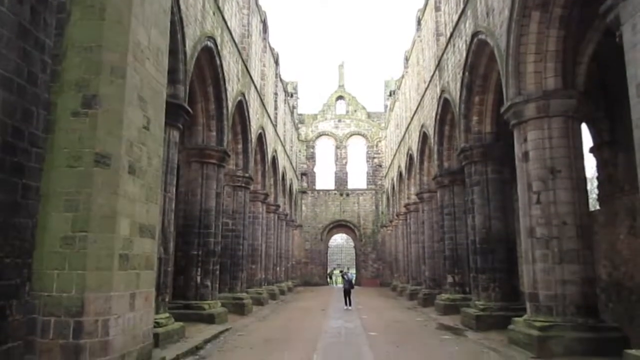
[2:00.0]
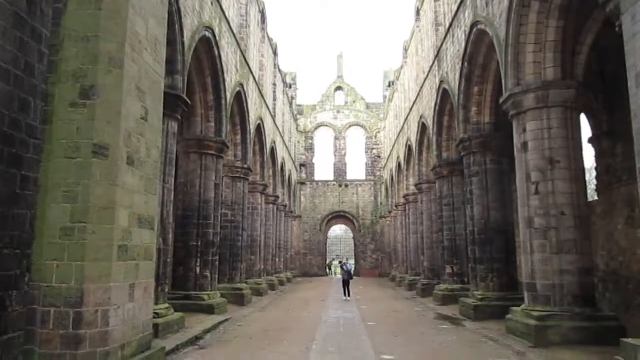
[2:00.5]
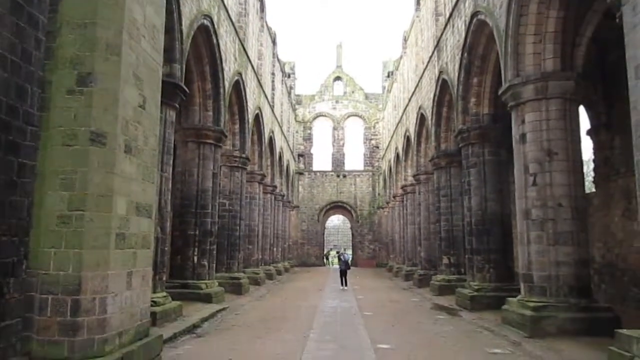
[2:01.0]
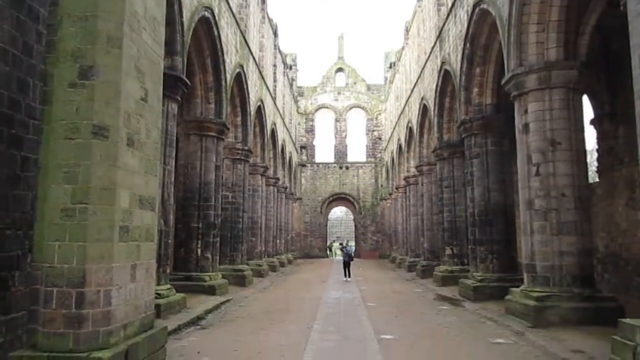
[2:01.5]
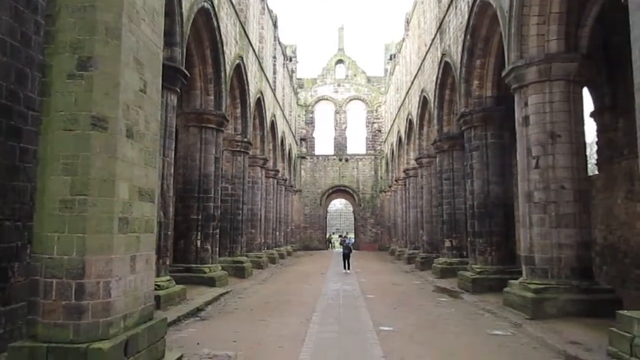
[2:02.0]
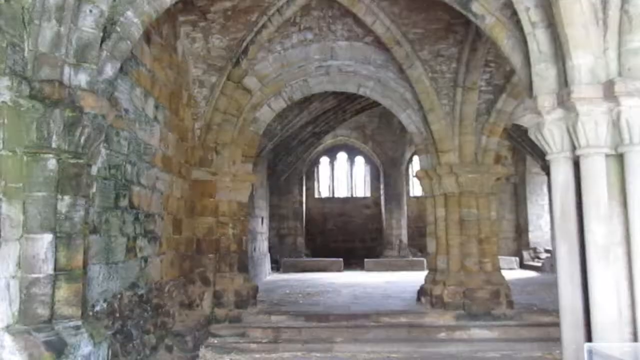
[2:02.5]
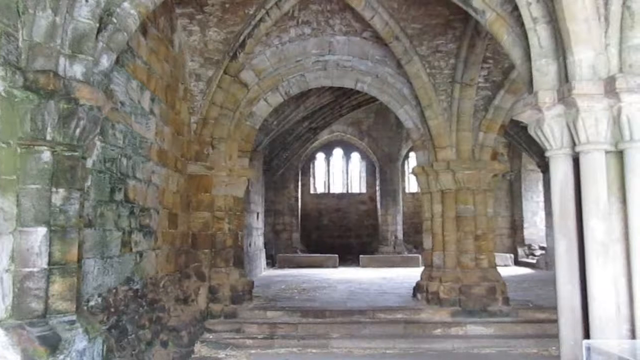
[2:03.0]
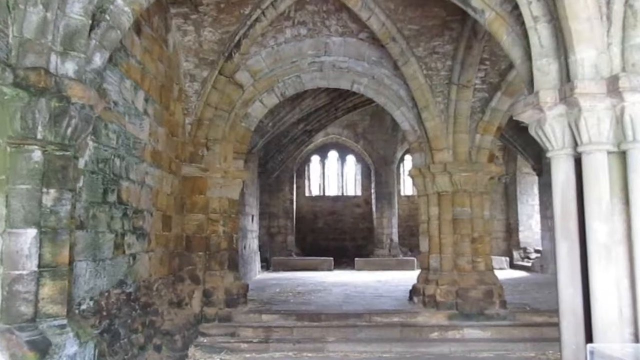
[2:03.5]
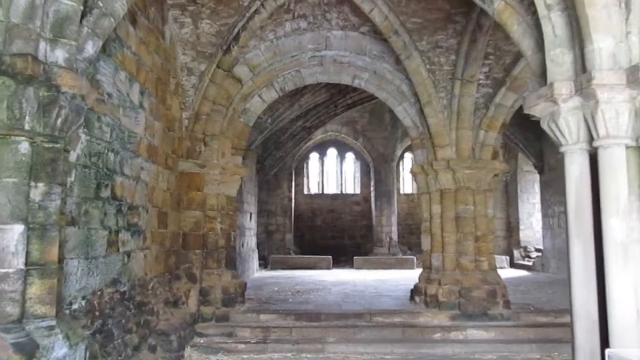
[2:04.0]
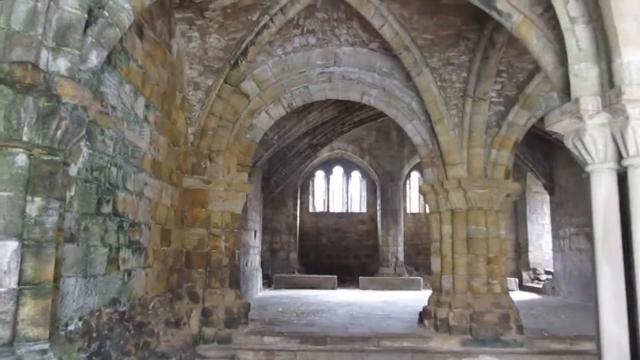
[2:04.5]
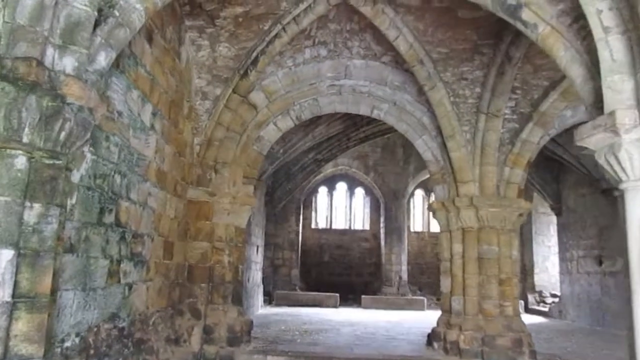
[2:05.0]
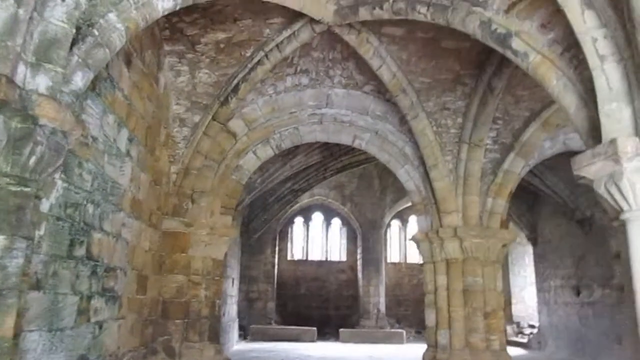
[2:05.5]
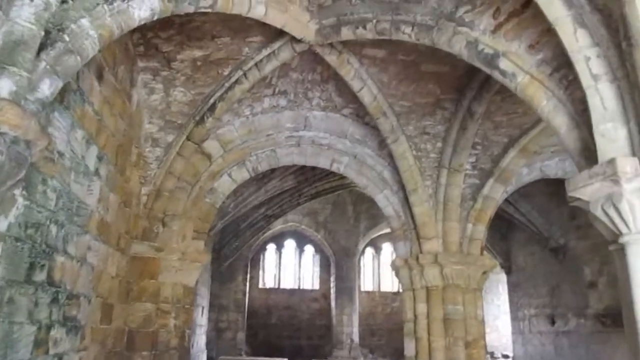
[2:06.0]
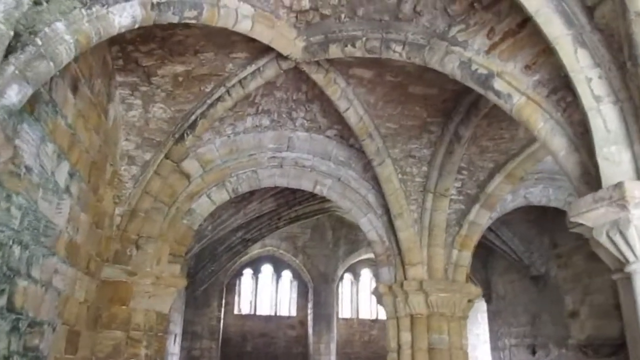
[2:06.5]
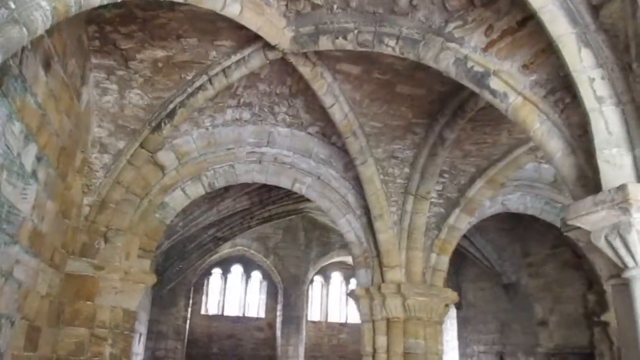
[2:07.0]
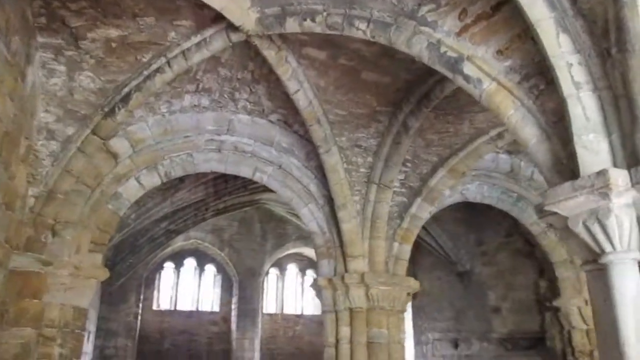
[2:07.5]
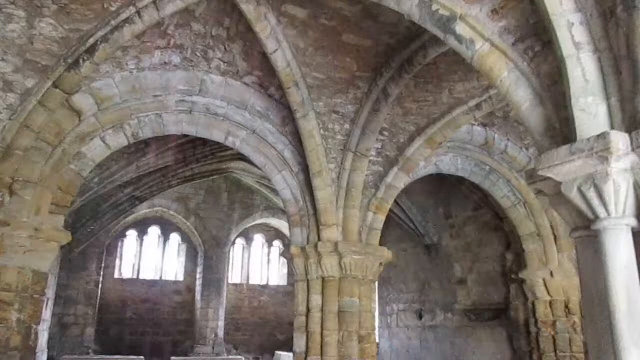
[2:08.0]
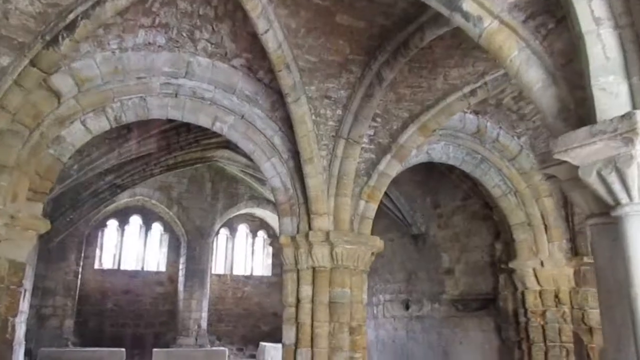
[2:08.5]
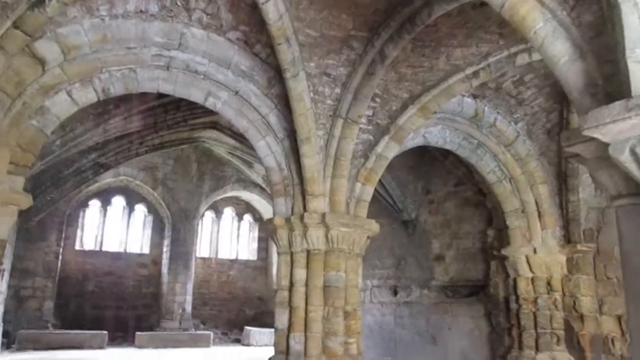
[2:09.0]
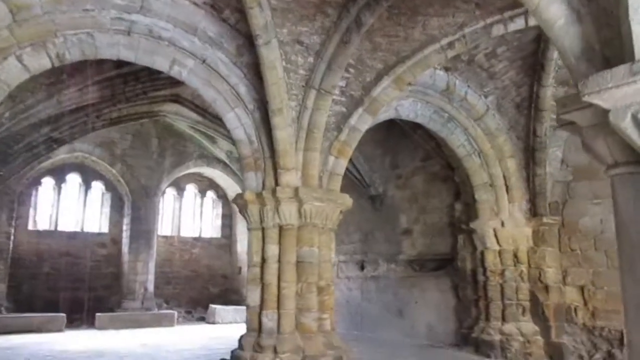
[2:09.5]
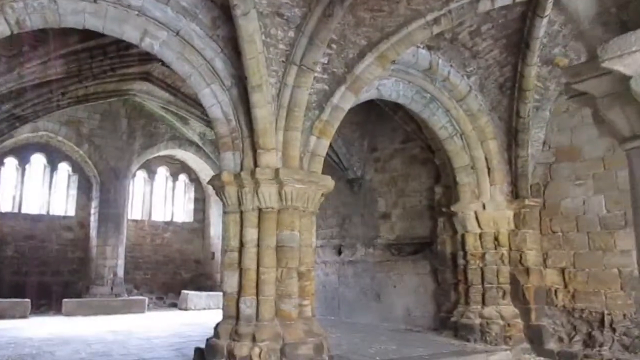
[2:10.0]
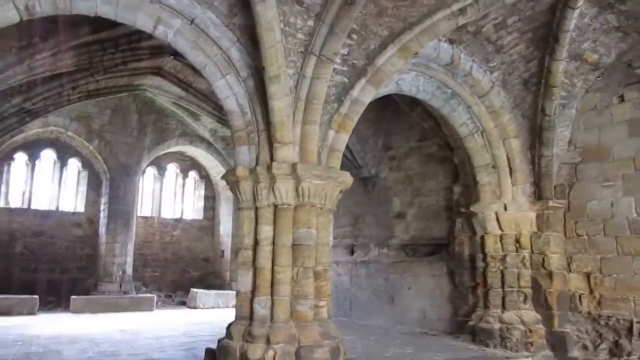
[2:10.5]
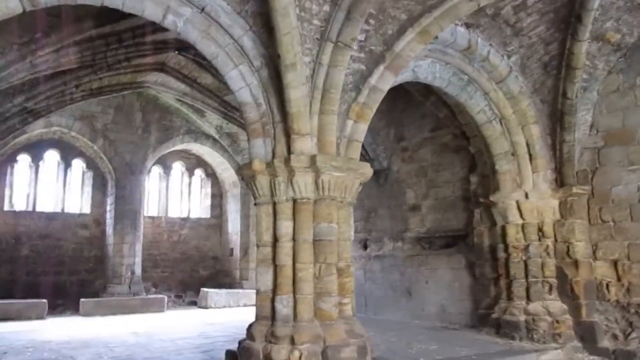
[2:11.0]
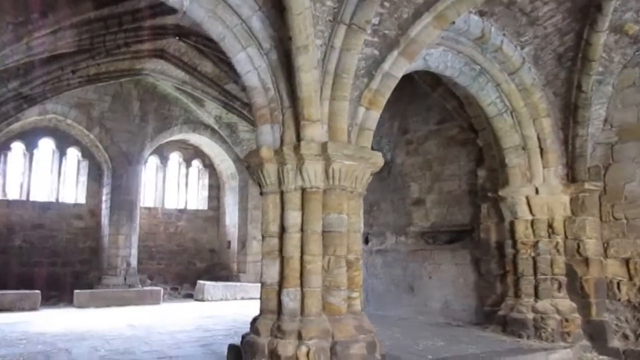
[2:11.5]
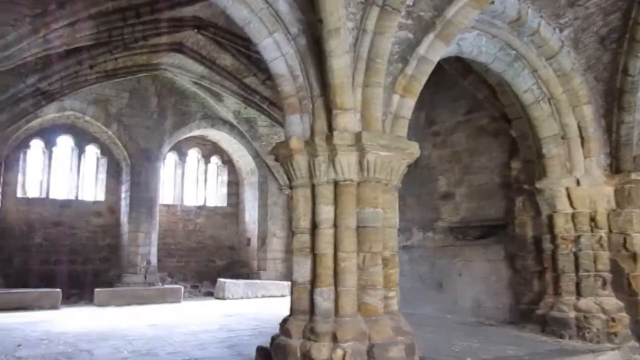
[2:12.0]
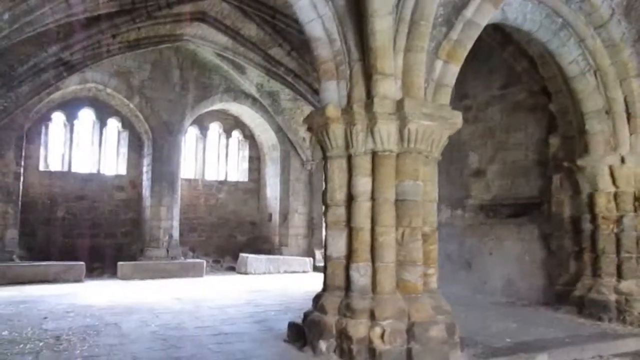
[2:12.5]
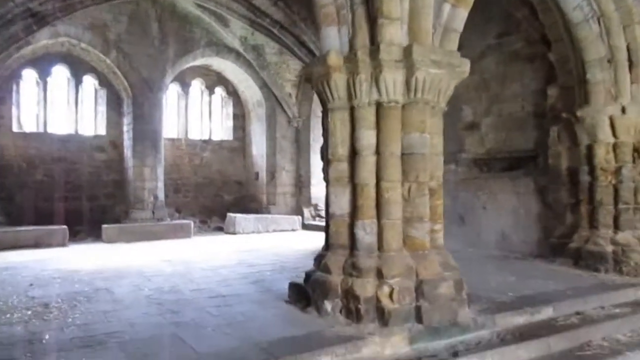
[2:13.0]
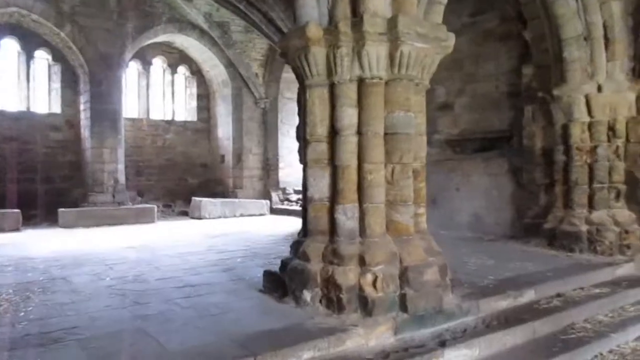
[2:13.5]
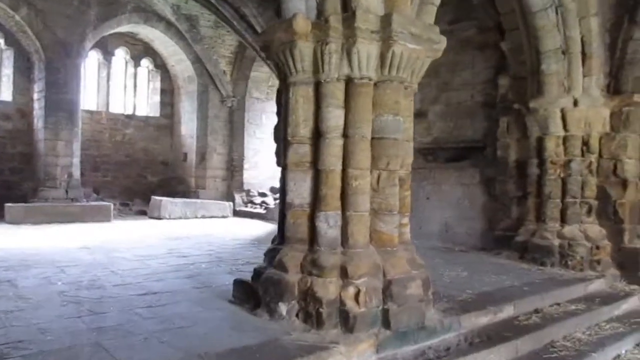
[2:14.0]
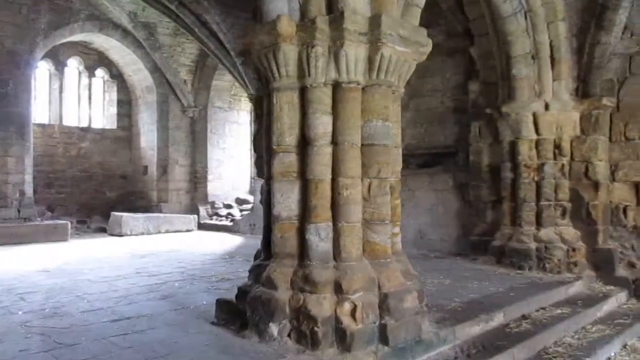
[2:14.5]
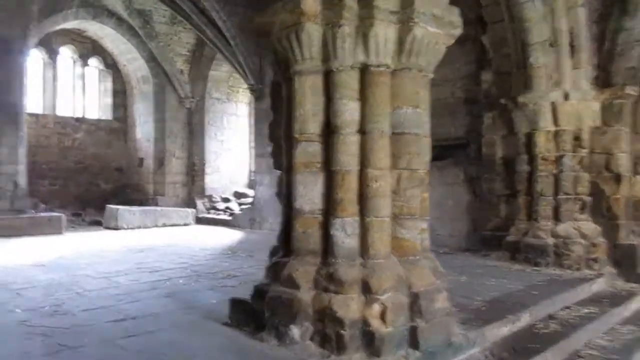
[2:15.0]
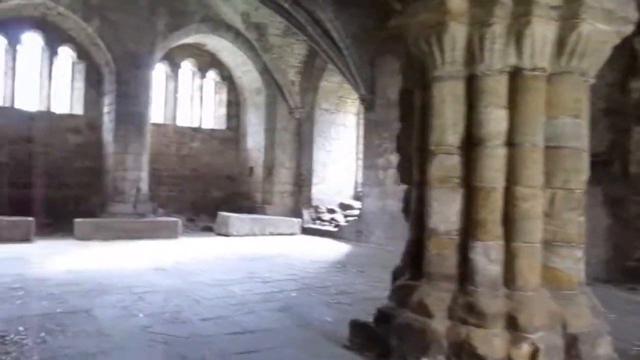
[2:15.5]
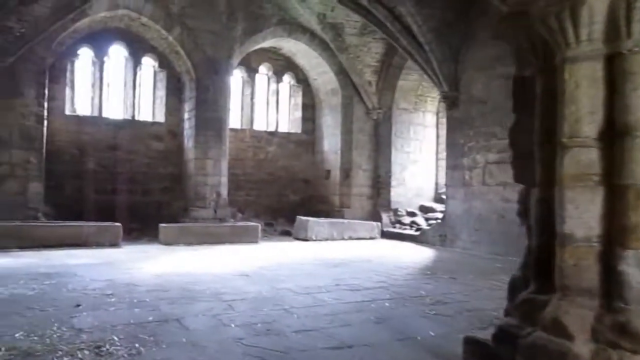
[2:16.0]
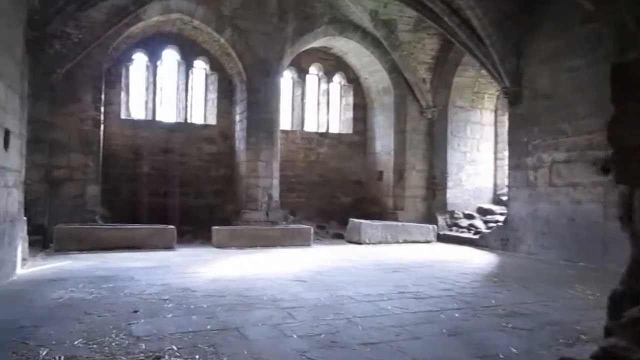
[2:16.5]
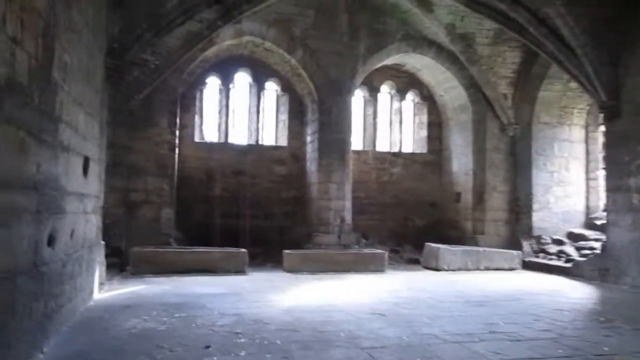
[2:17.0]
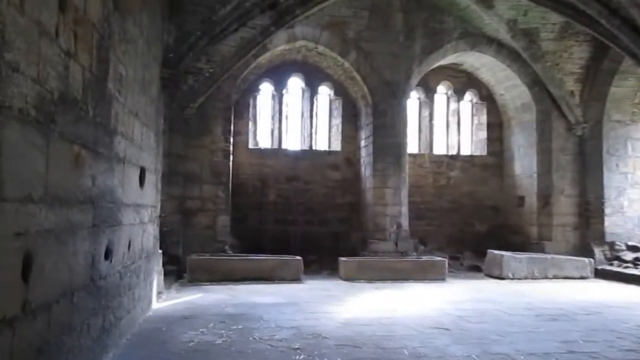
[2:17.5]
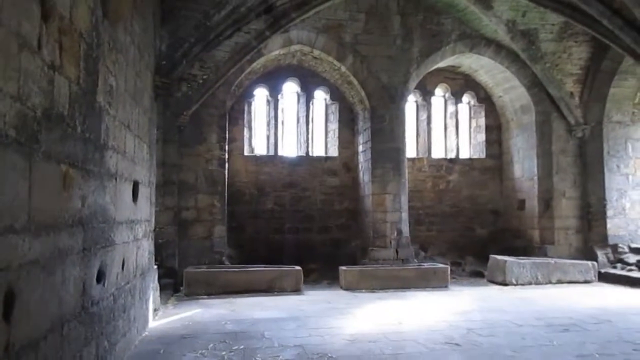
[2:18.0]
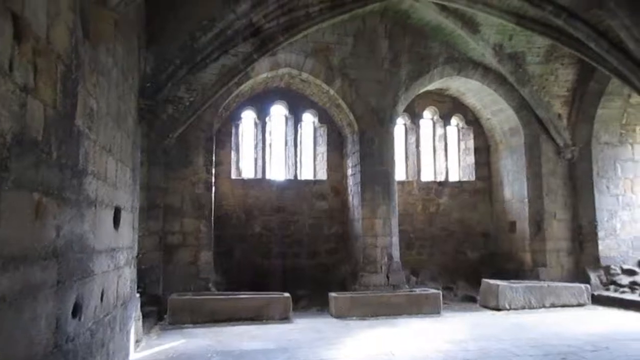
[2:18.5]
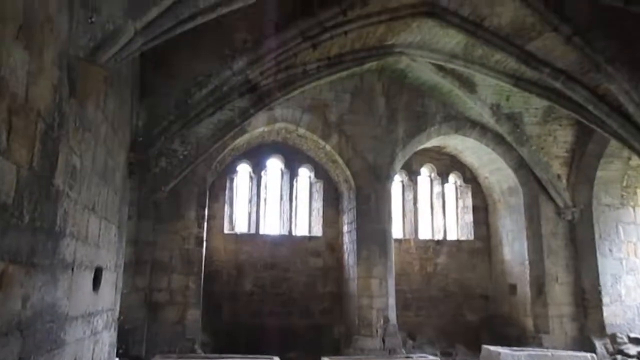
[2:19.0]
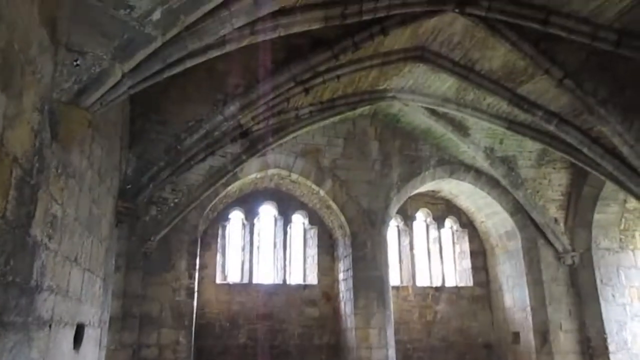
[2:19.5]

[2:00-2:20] The camera shows the main long hallway. At its end is a gateway that leads outdoors to what appear to be stairs. There appear to be multiple people standing in the gate, but they are very far away. Above the gate are two large, very tall archways, and above those is one smaller archway. There is a similar triangular point, with one tall spire extending from the center and two towers on each side. The camera tilts slightly. Then the video cuts to a more close-quarters interior location with multiple archways, two different sets of them connected by pillars in the center. The person walks forward and looks to the right at one of these pillars, then pans to the left to show the far wall, which has two archways, each with three windows, with light coming in through the ones on the left. The camera points upward to show the vaulted ceiling.